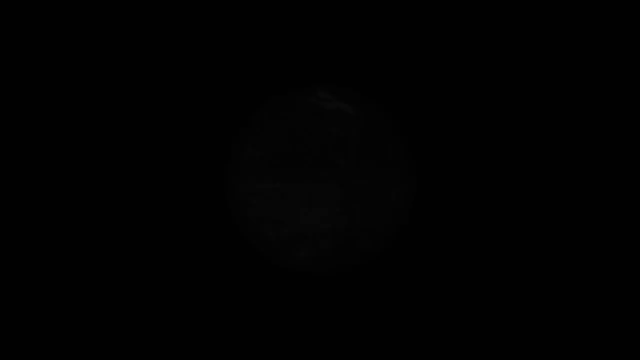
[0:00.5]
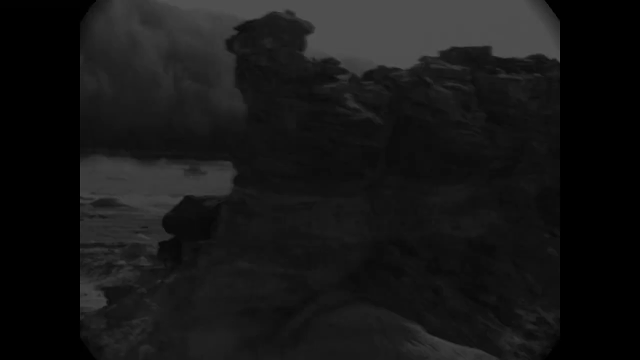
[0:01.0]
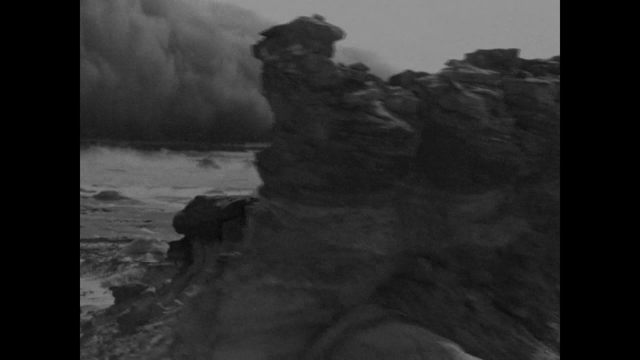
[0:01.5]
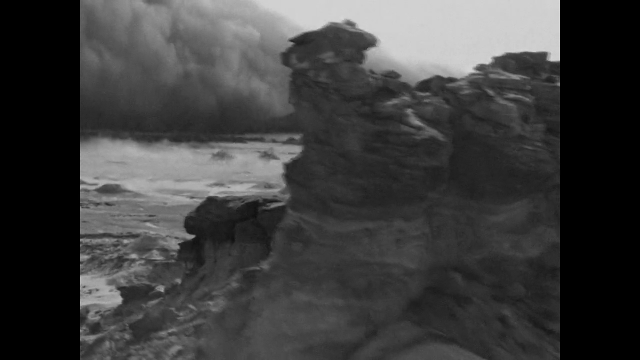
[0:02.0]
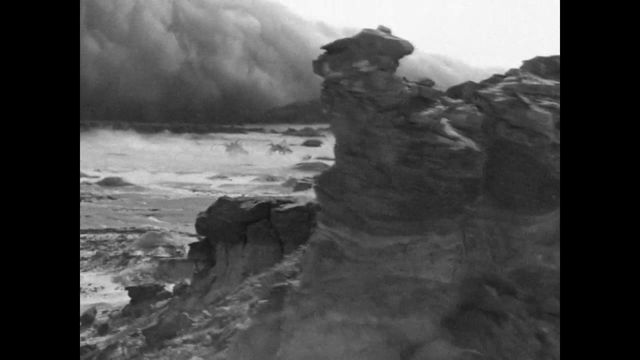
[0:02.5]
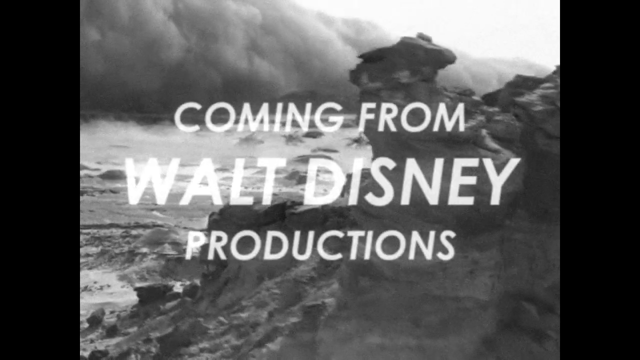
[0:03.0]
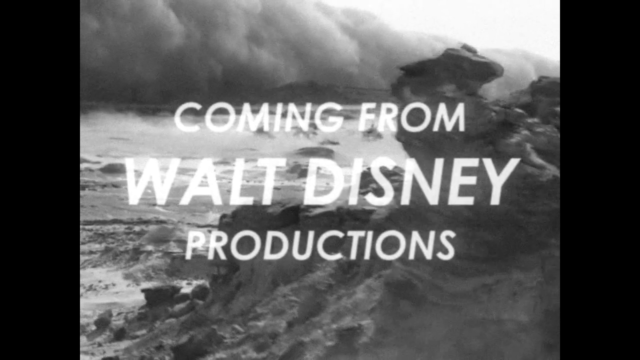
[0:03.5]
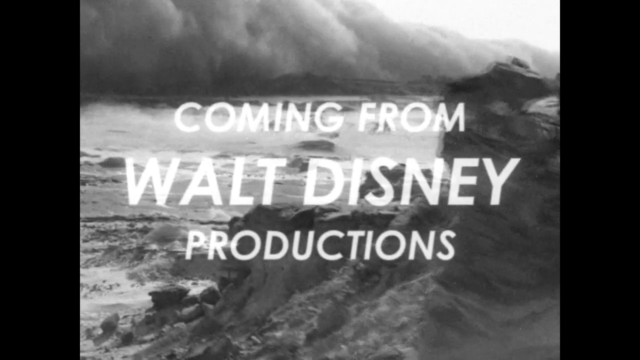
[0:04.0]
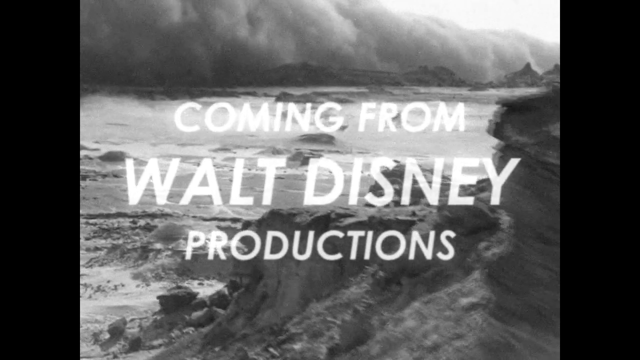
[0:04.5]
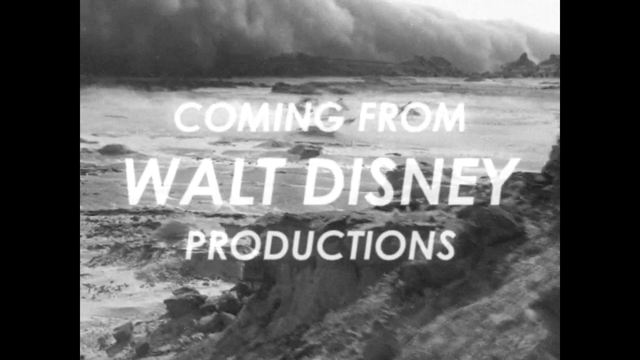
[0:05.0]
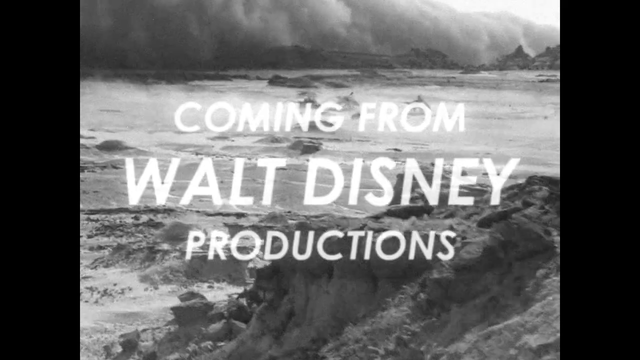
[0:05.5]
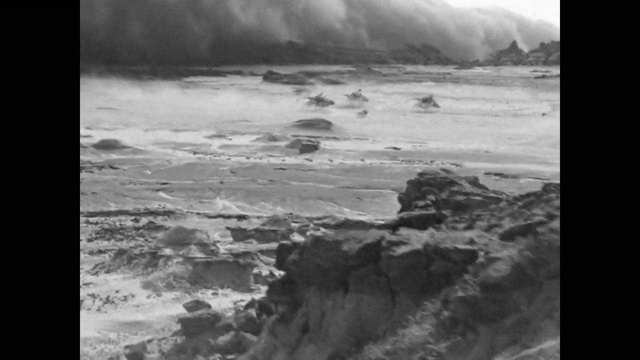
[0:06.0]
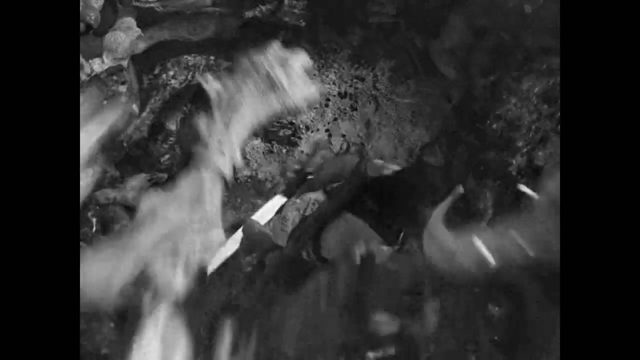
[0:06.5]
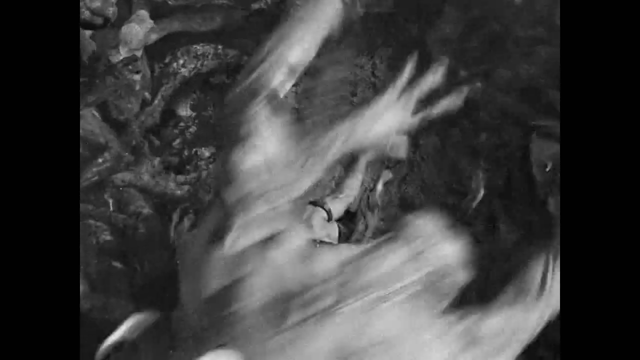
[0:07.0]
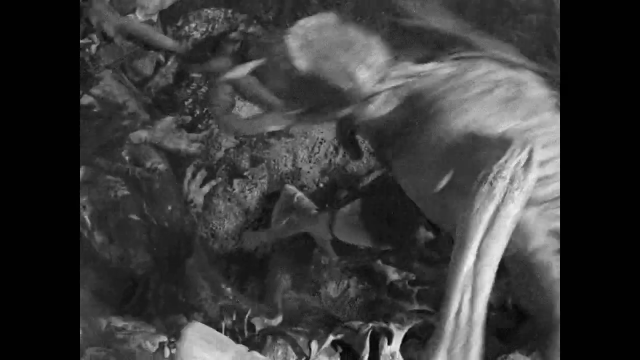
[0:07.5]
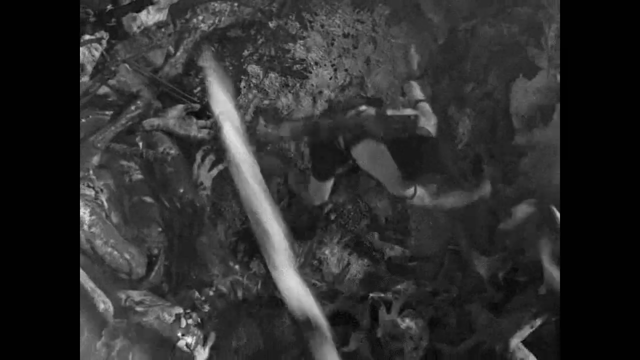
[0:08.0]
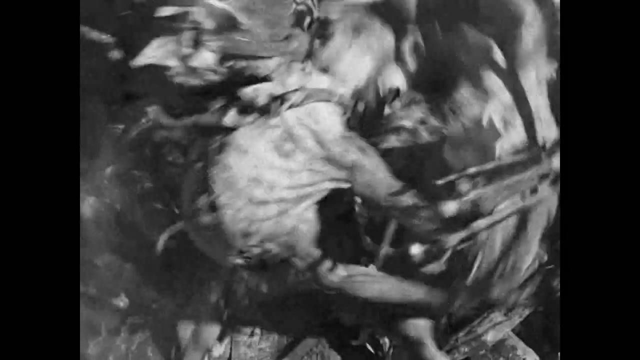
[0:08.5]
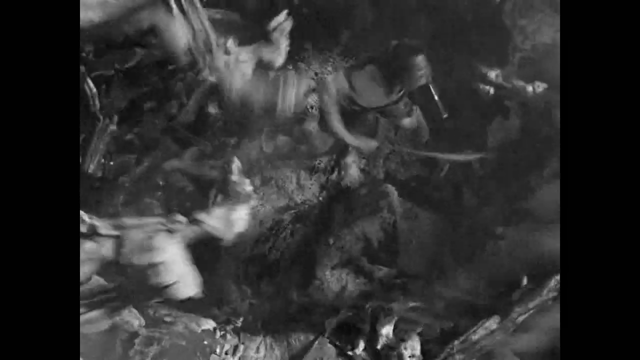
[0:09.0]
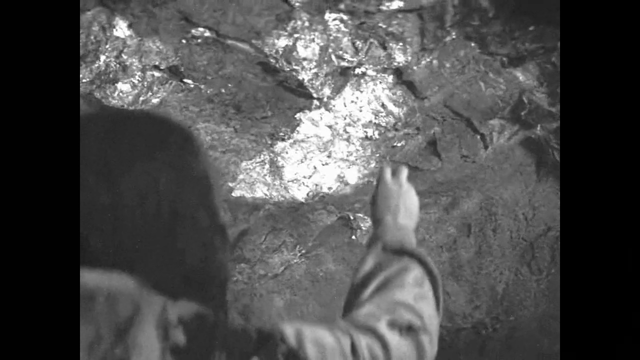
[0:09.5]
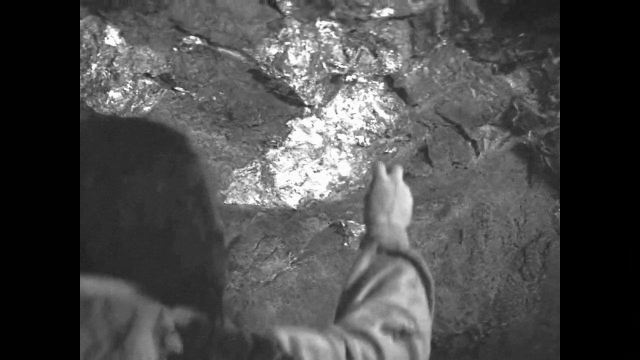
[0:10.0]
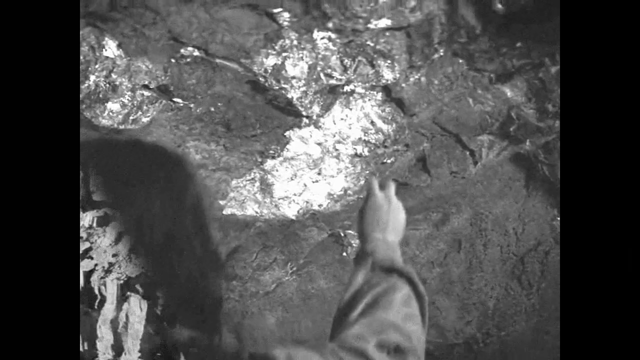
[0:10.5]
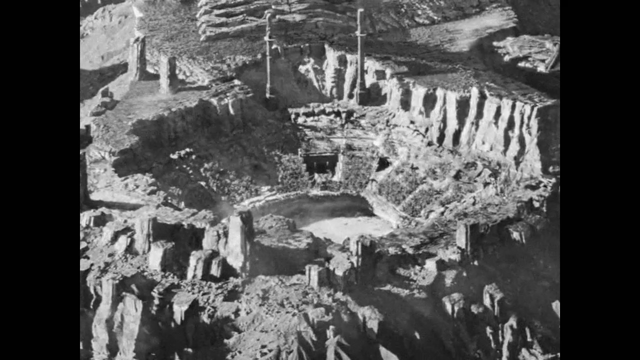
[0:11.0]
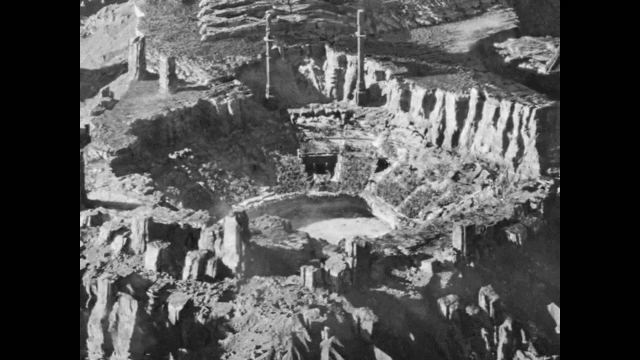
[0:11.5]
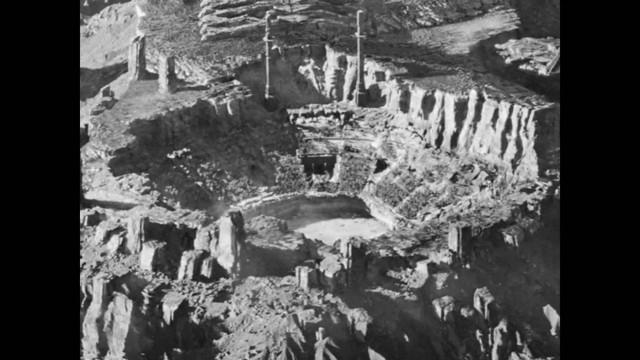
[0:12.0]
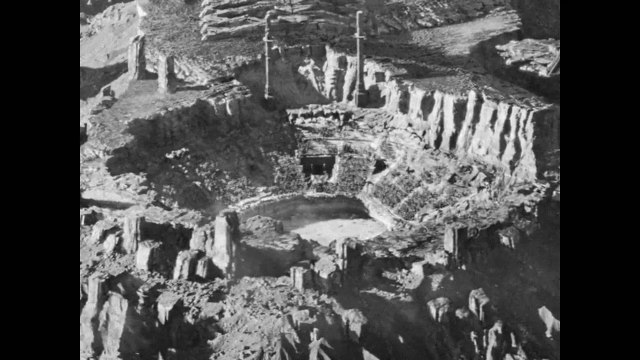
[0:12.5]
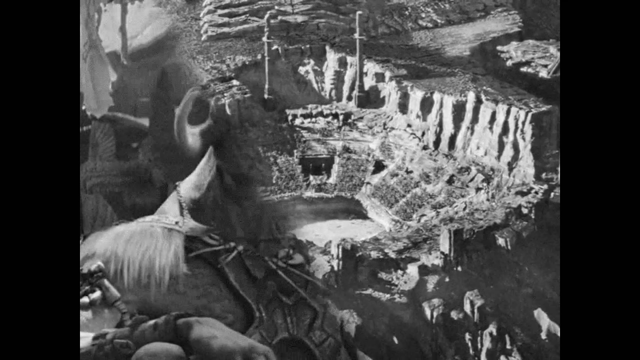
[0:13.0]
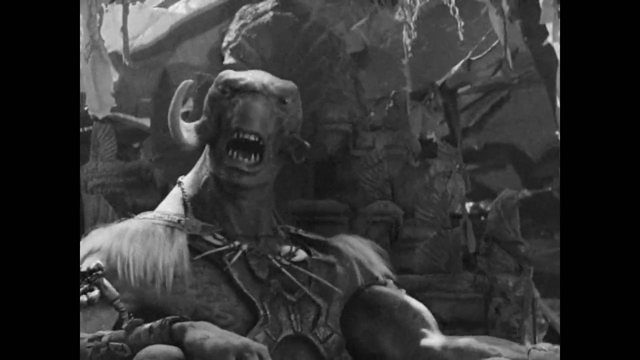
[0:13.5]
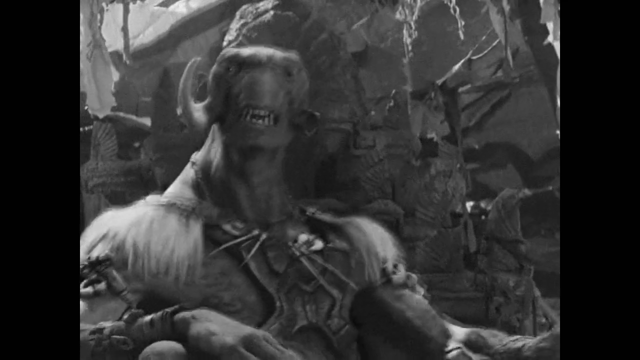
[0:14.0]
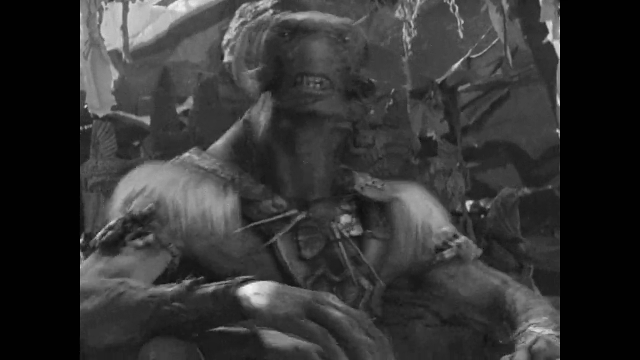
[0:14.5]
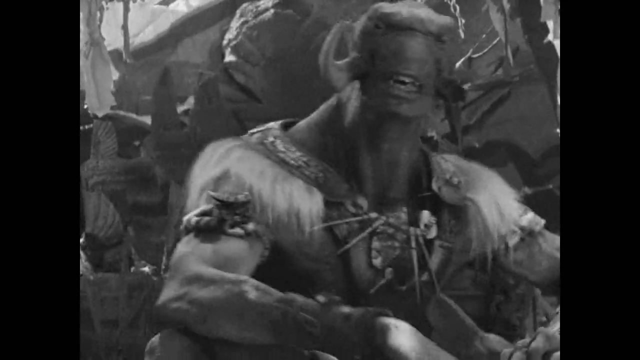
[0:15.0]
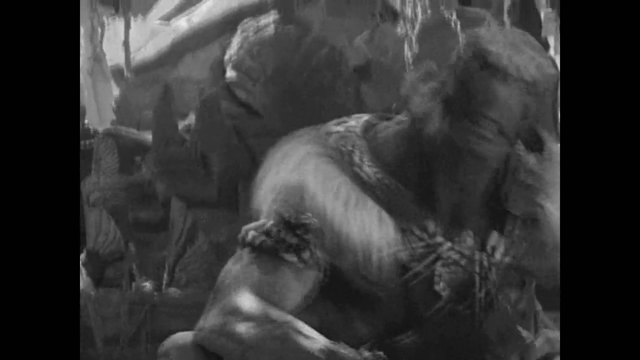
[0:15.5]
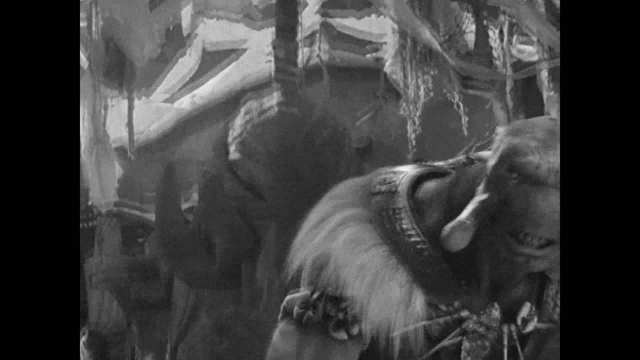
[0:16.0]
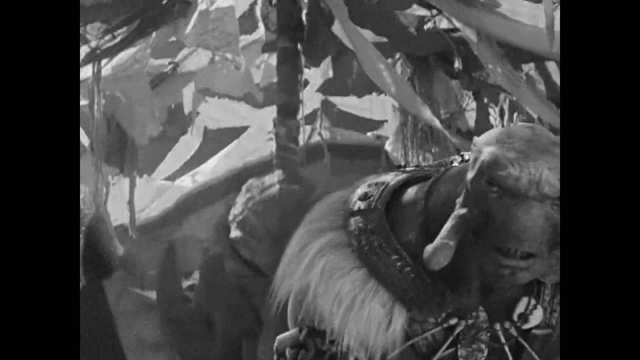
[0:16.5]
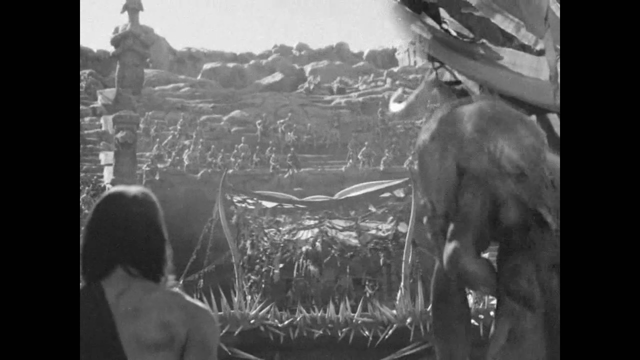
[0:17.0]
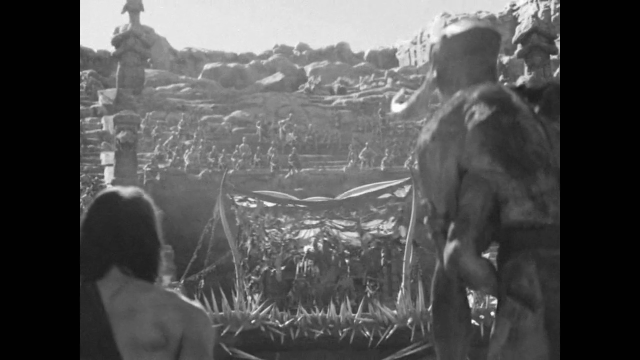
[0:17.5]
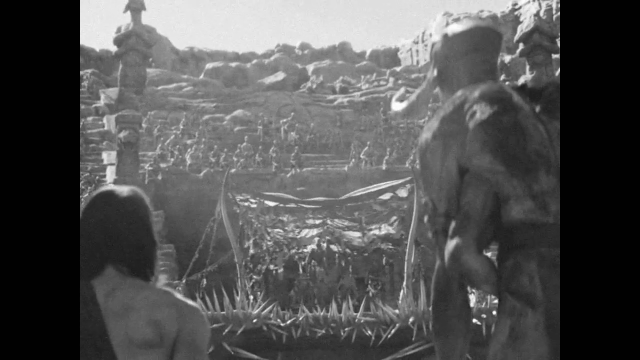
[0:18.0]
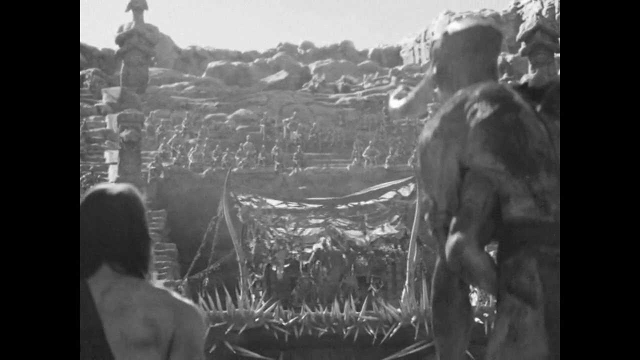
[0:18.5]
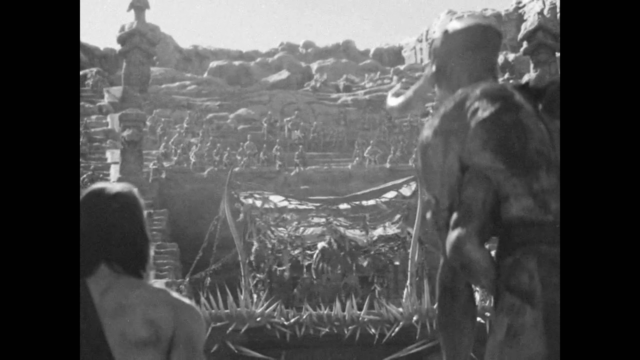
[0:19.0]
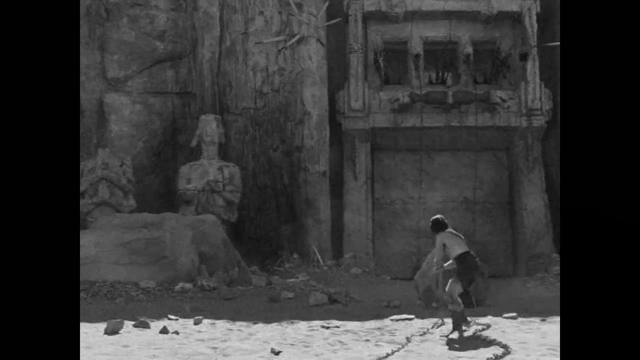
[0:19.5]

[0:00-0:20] The video is presented as coming from Waner Brothers Productions. Characters from Star Wars appear. In a desert, an animal runs, escaping from a sand storm, and there are animals with people or something riding them. A man is attacked by some creatures. Everything is in grey, black and white images. A Coliseum and big ears appear, followed by people and more people.